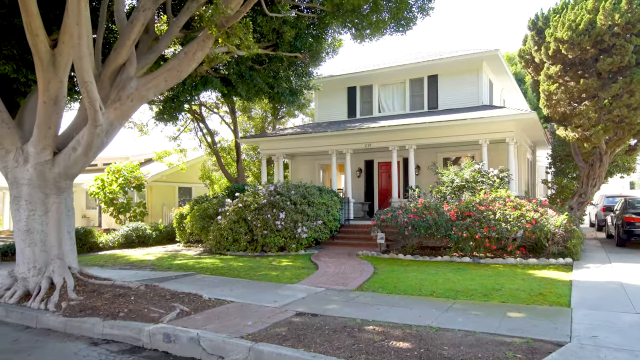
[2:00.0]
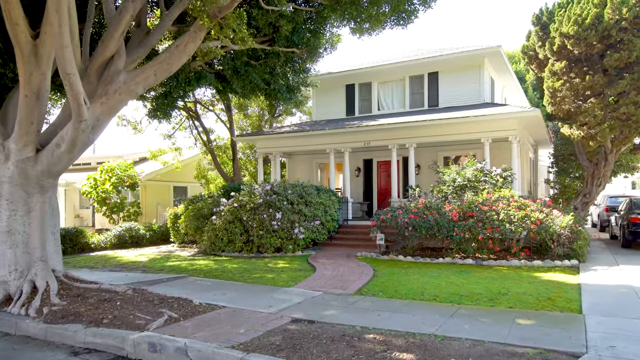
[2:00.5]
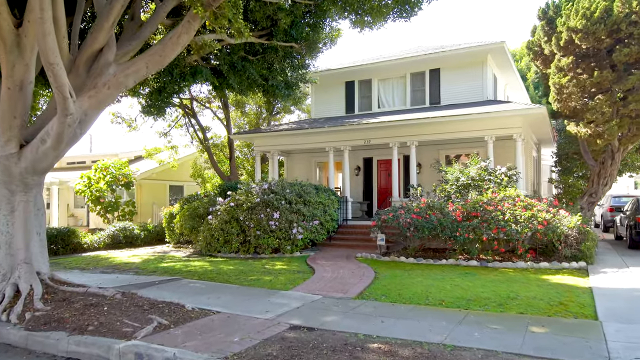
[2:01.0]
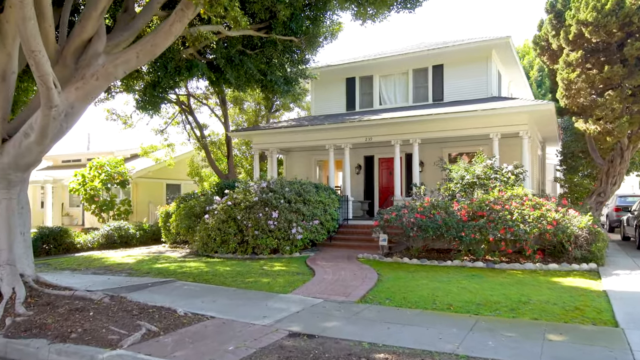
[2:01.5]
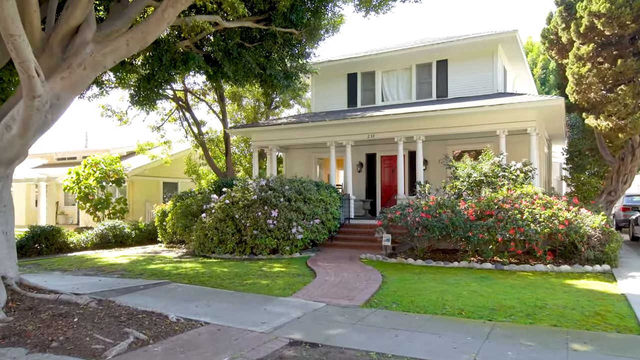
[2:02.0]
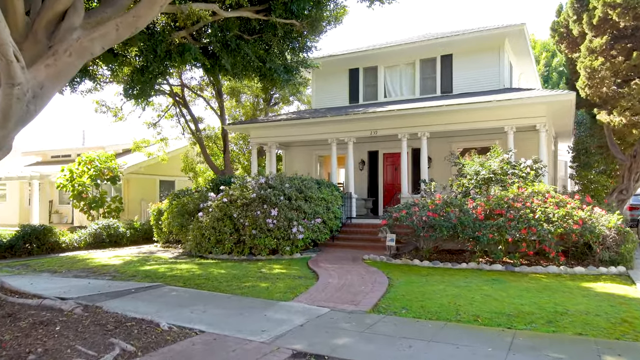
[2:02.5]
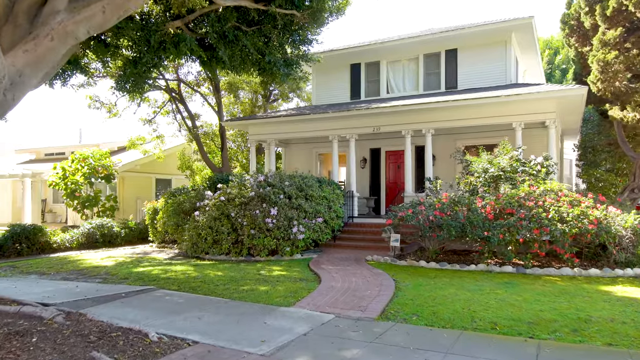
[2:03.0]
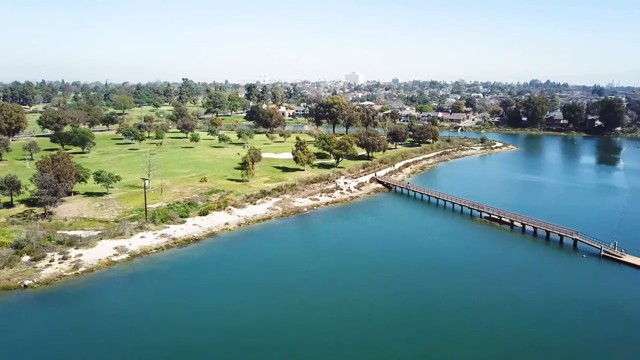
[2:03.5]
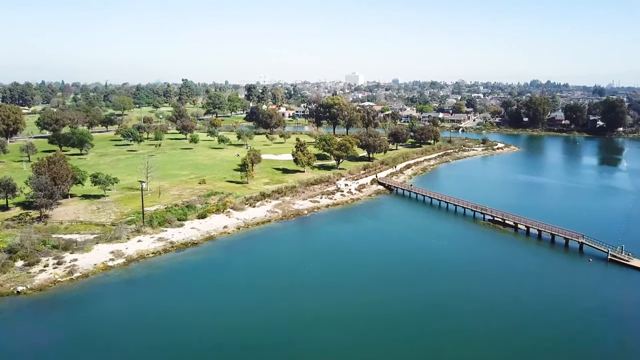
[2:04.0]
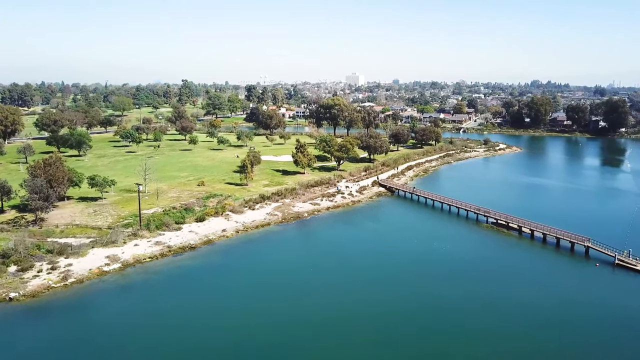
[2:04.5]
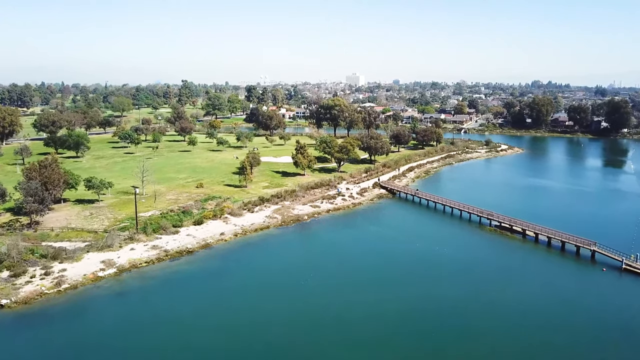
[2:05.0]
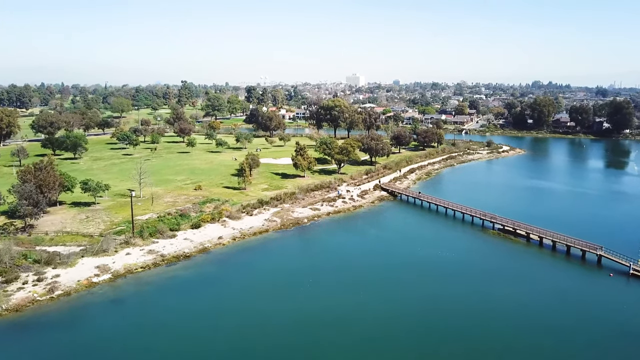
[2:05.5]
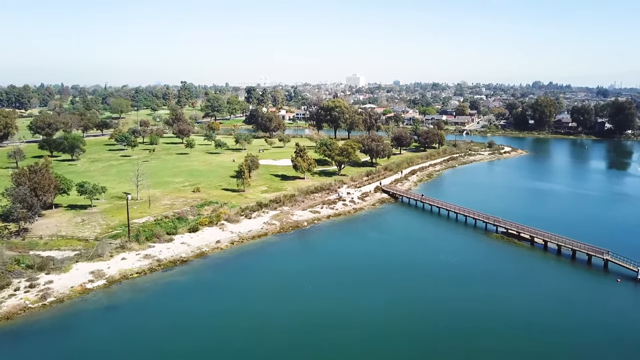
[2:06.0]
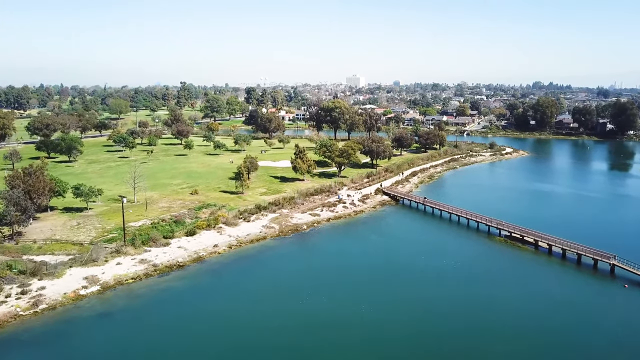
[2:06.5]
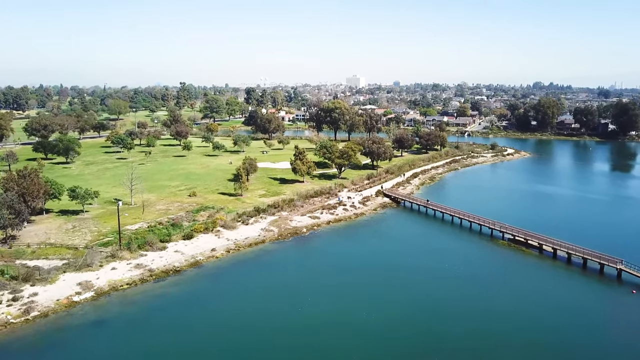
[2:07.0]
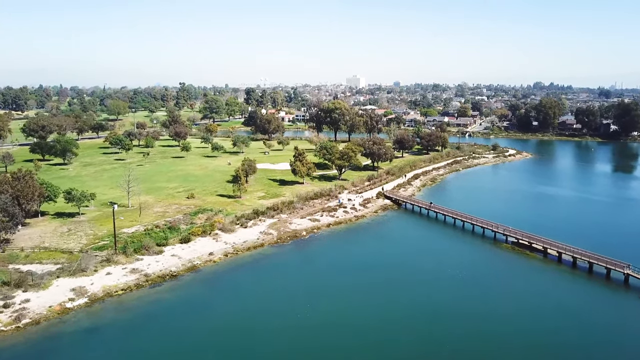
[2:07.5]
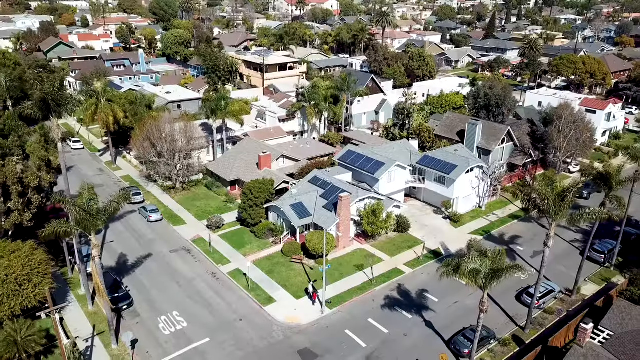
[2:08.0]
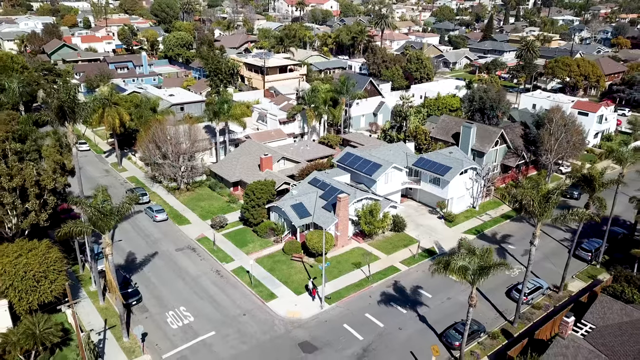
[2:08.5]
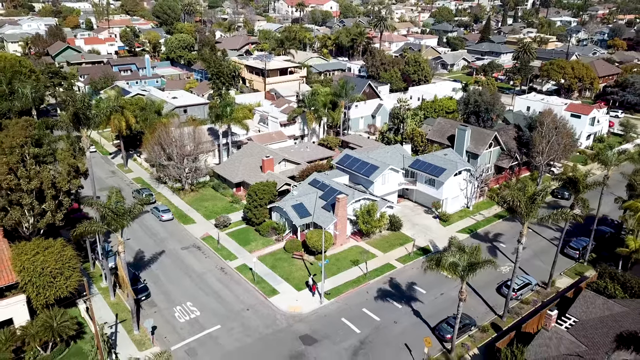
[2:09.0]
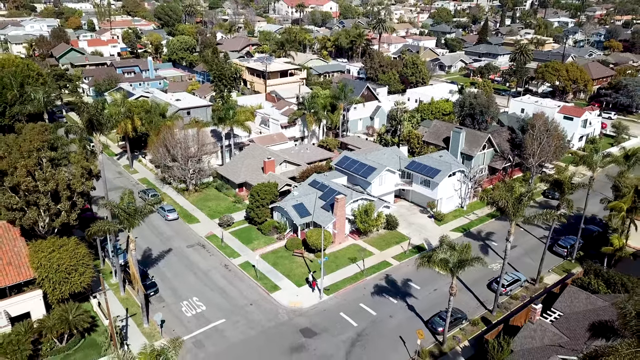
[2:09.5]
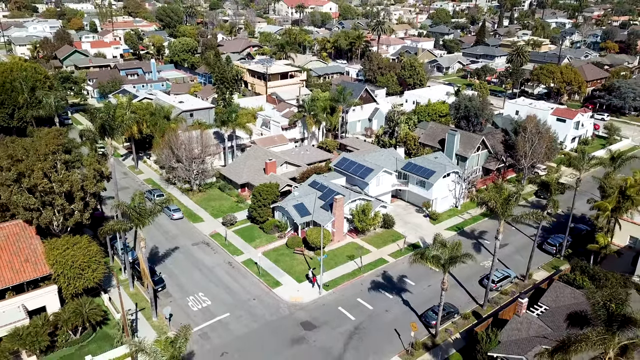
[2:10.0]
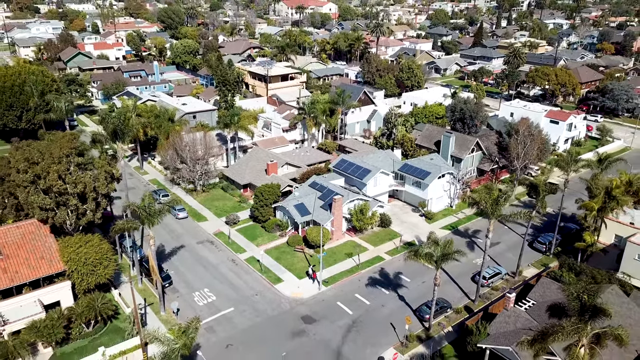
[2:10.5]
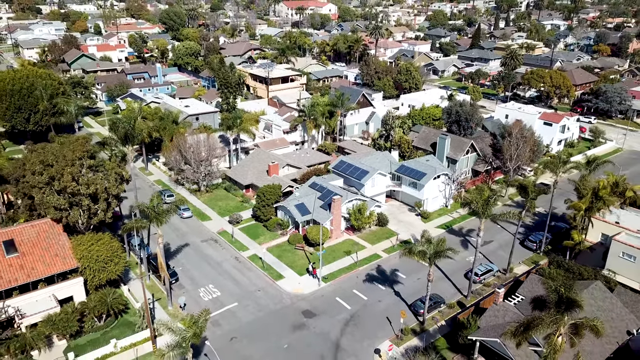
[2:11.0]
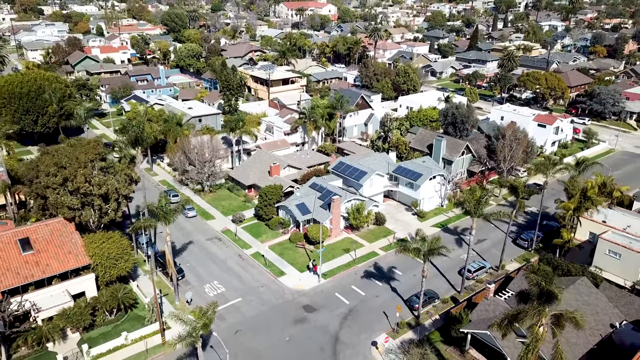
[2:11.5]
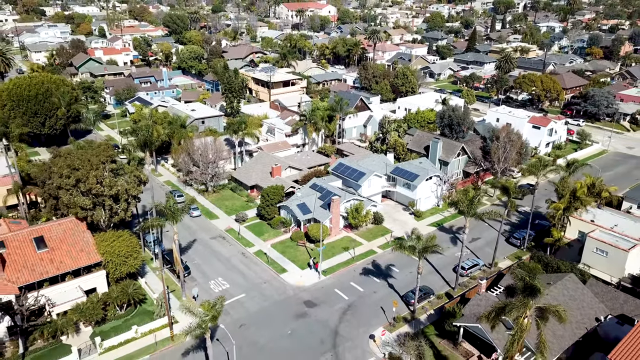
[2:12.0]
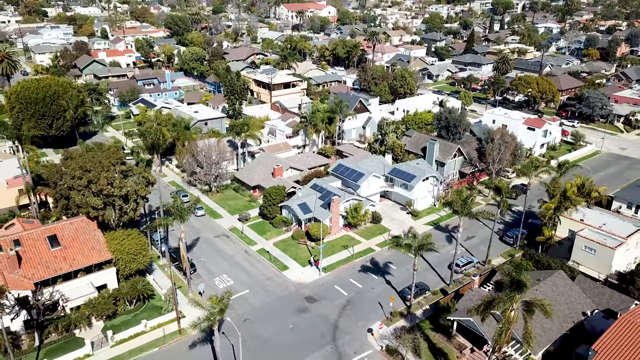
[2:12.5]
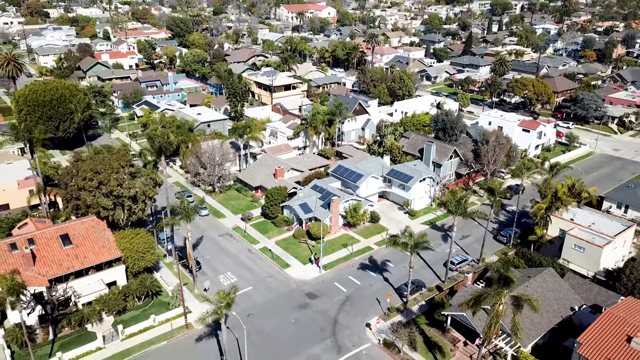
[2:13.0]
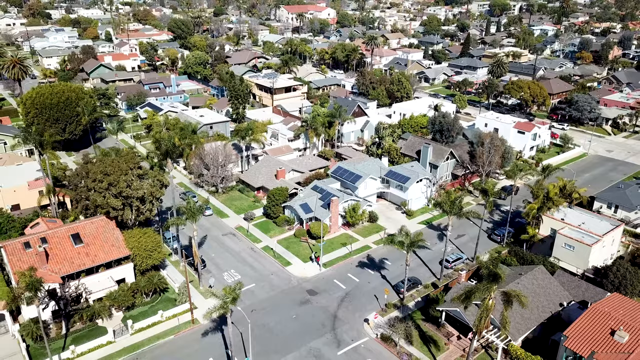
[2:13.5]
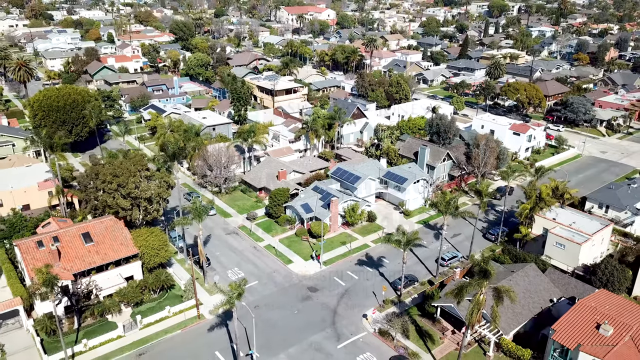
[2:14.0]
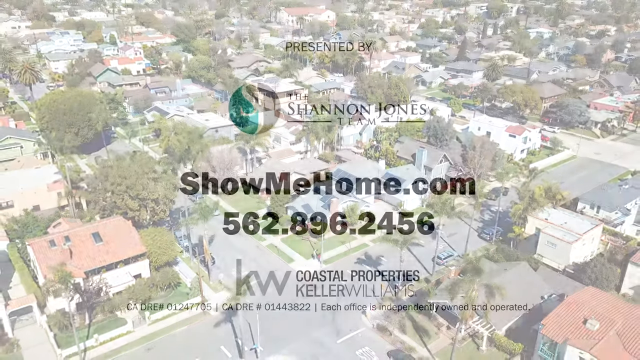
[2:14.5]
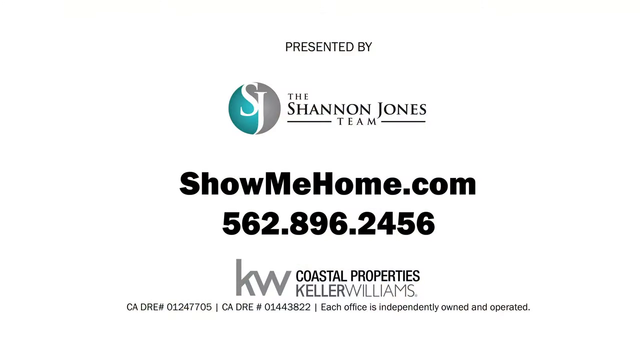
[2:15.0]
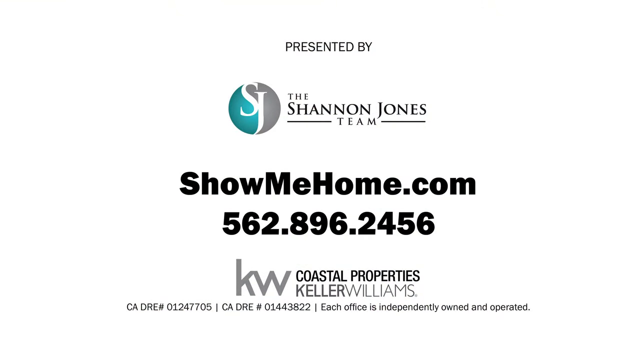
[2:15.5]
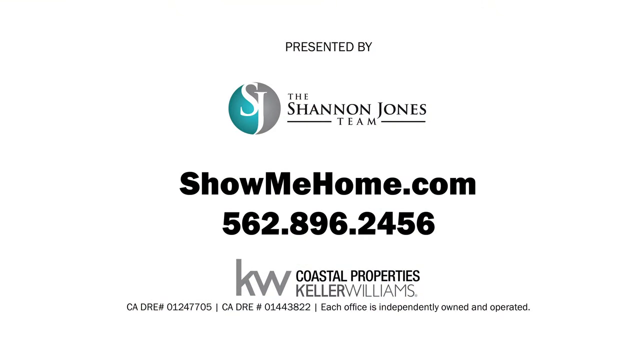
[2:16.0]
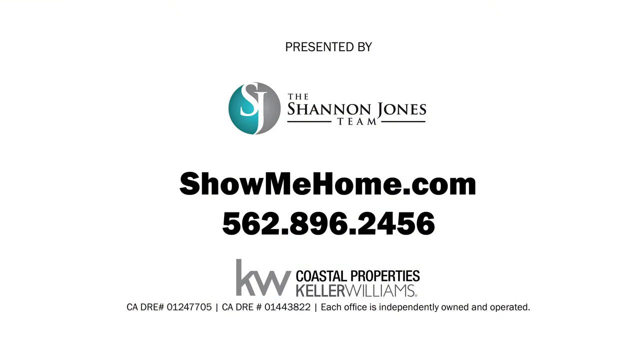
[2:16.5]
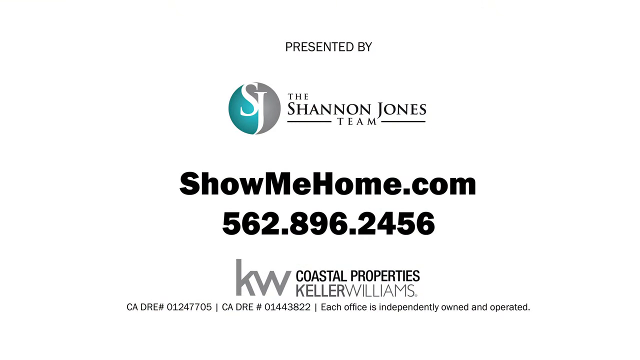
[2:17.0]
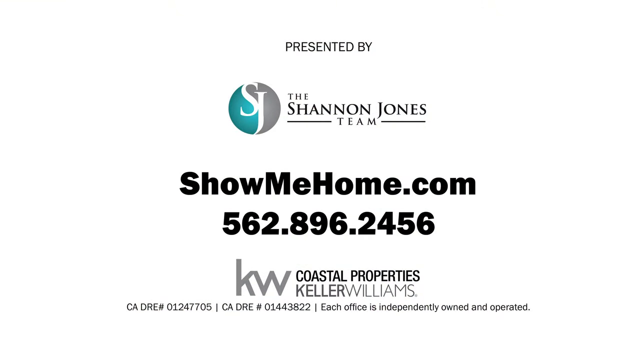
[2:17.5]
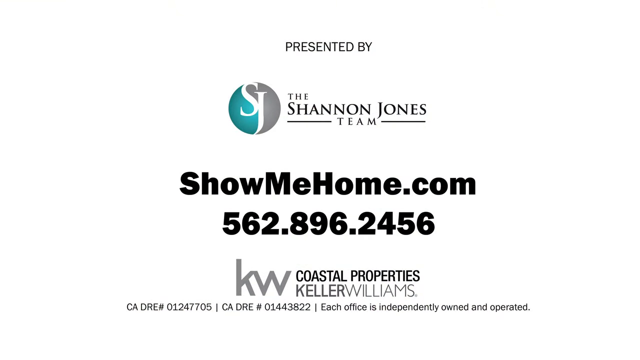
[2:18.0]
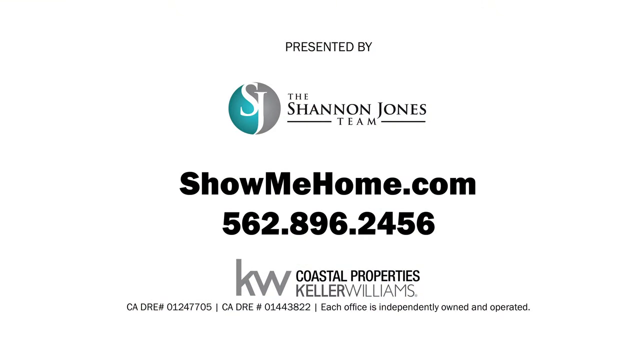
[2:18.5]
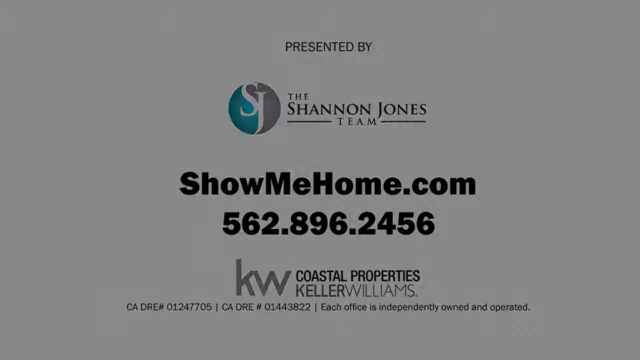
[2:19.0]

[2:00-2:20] The camera continues moving as a very nice two-story green building comes into view, with a few steps at the entrance, a trimmed lawn, and trimmed flowers in red, green and white on the side. A big, well-trimmed tree is also on the side. The video then shifts to an aerial view of a lake with a bridge and maybe a park, filled with green lawn and trees. Another aerial view shows a suburb with trees and houses that look crowded but very neat. The video then shifts to a white background with text reading "presented by the Shannon homes" and a logo on the left side, along with "Shannon Jones team" and "ShowMeHome.com", with a number below, maybe a phone number, and "KW Costa Properties Keller". There is also information in very small text: "each office is independently owned and operated".